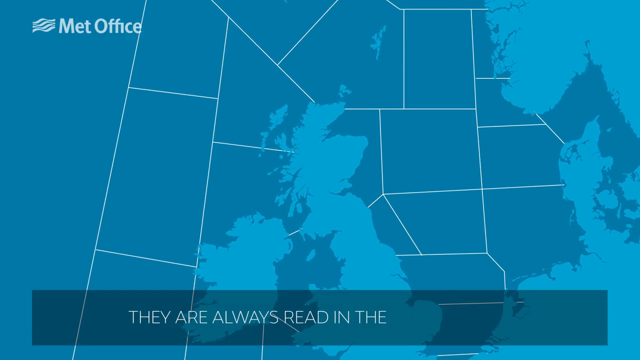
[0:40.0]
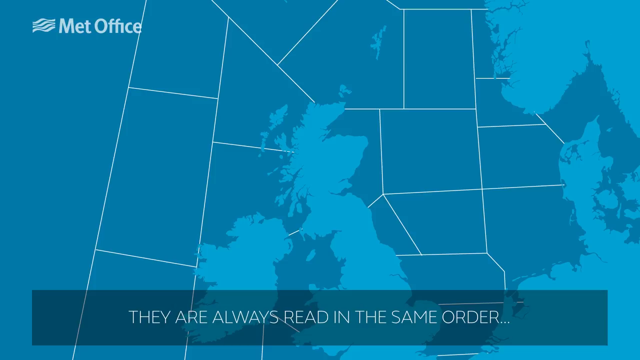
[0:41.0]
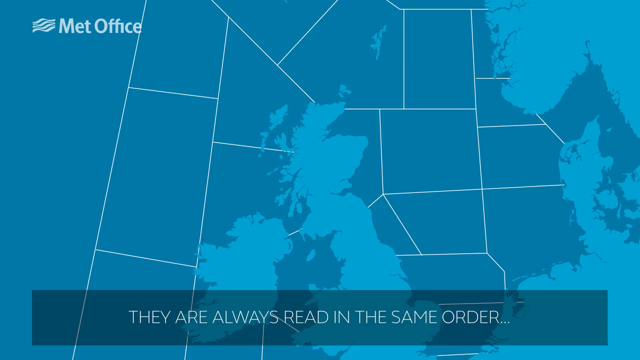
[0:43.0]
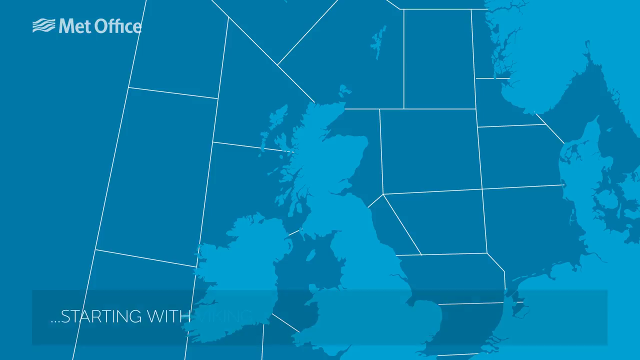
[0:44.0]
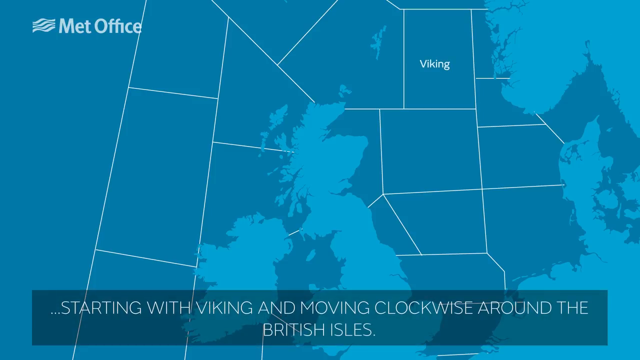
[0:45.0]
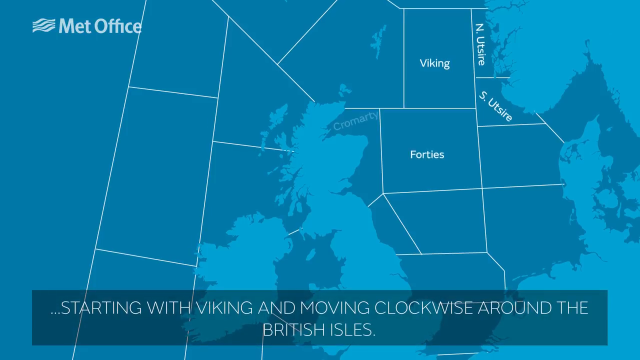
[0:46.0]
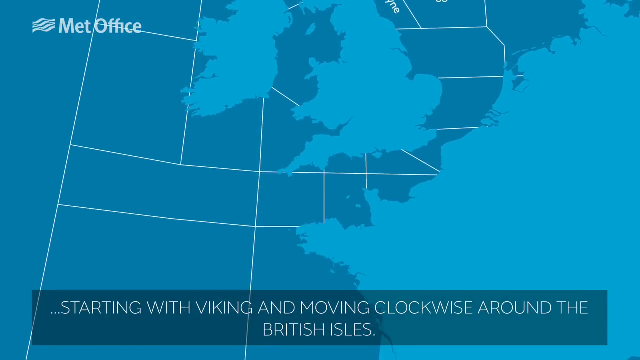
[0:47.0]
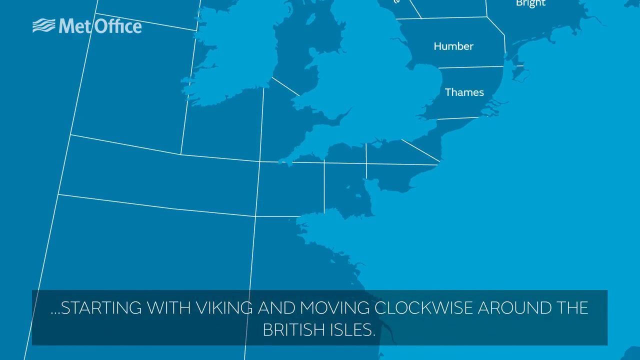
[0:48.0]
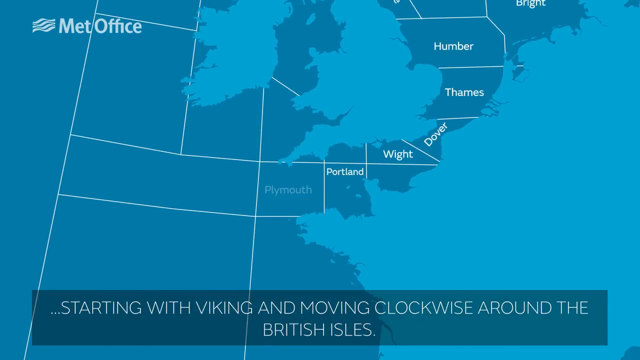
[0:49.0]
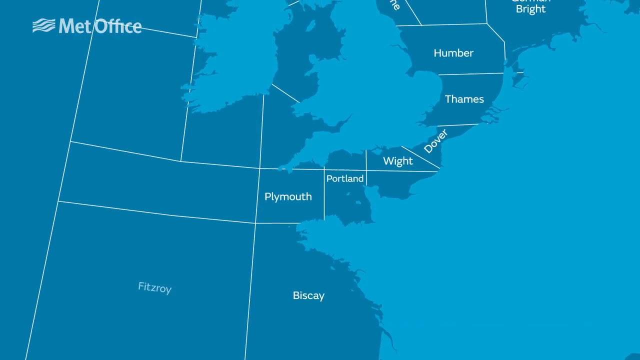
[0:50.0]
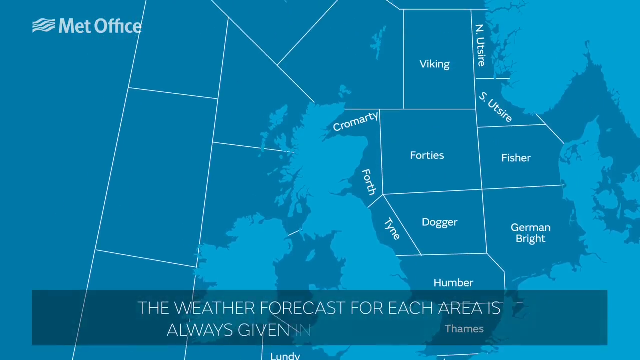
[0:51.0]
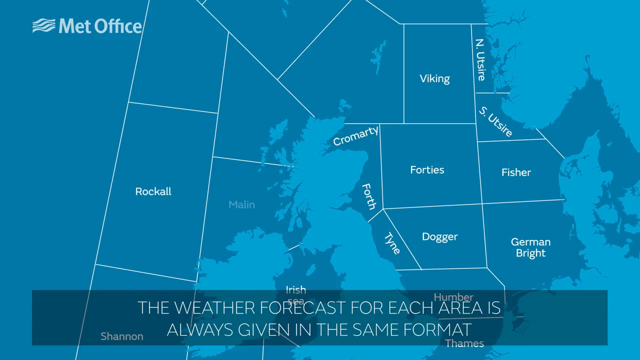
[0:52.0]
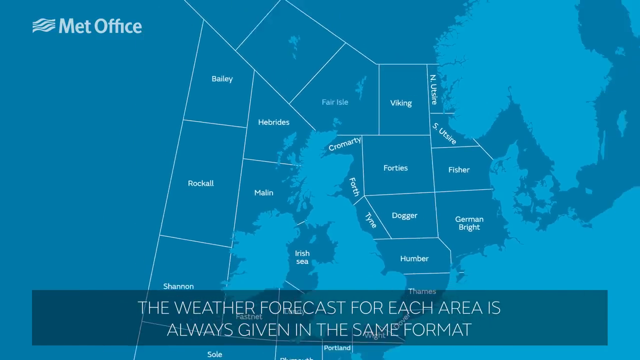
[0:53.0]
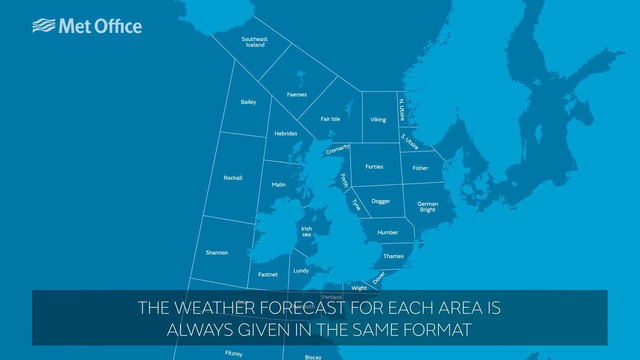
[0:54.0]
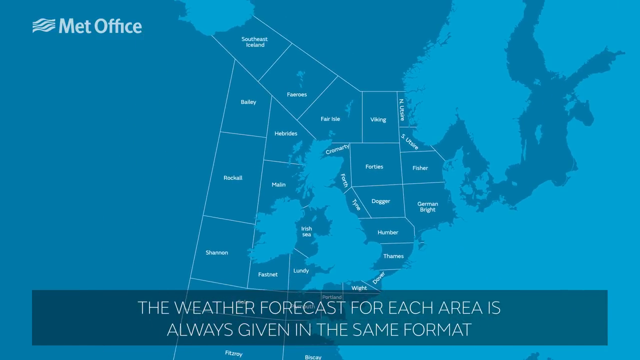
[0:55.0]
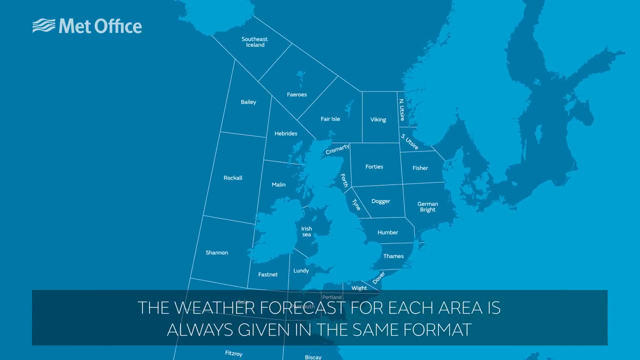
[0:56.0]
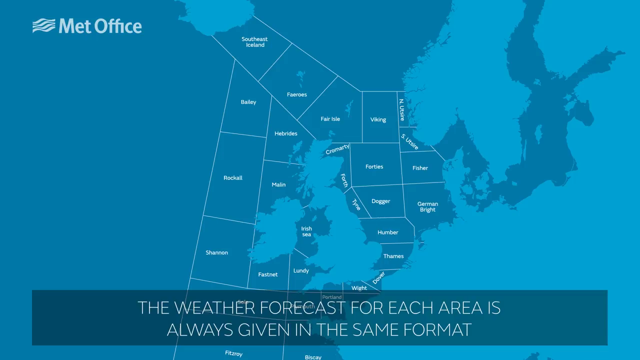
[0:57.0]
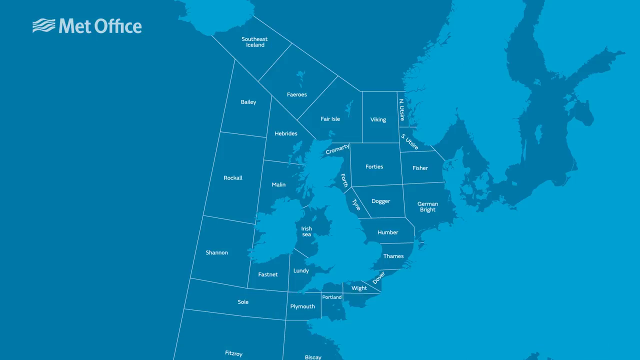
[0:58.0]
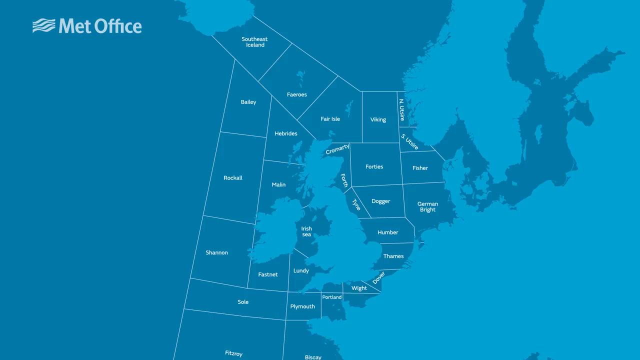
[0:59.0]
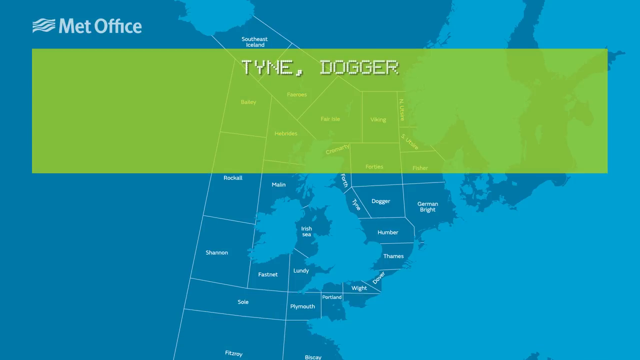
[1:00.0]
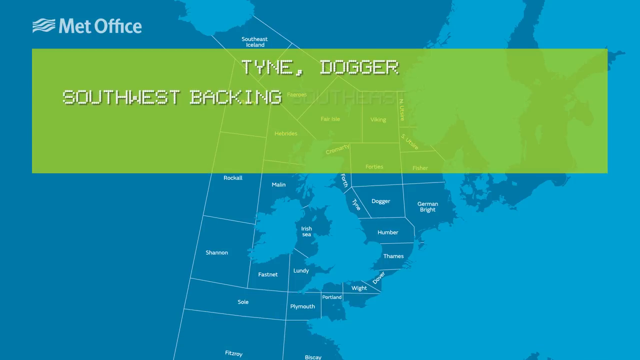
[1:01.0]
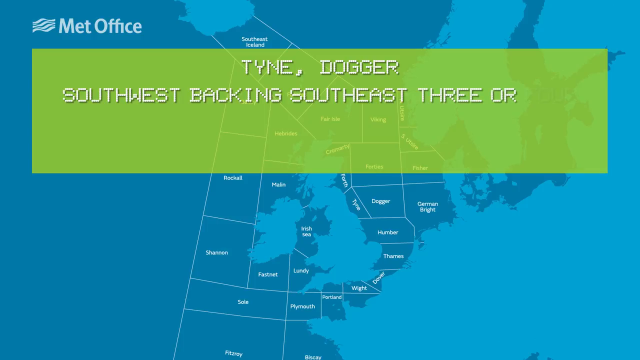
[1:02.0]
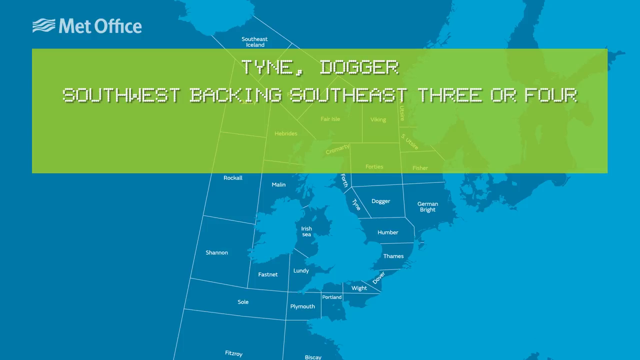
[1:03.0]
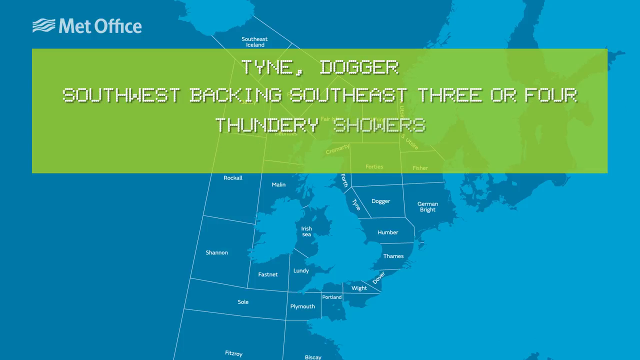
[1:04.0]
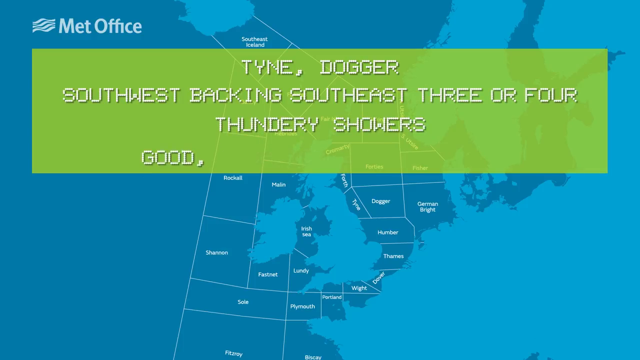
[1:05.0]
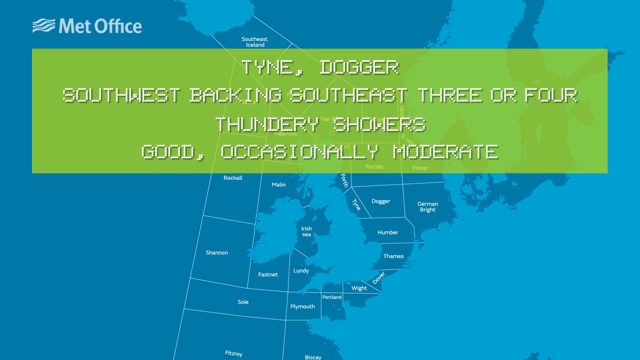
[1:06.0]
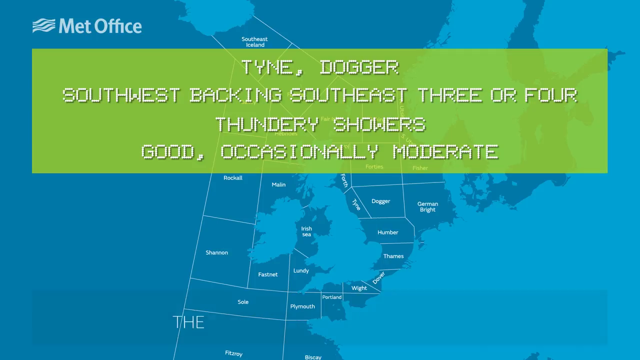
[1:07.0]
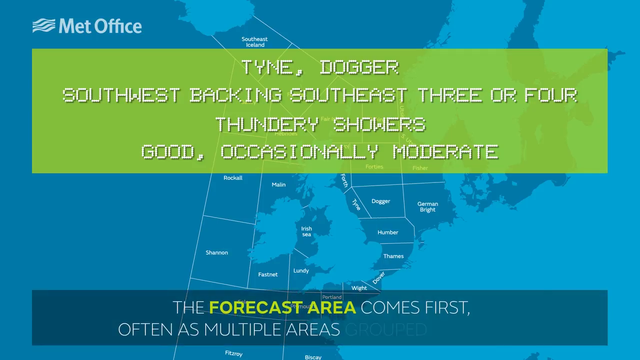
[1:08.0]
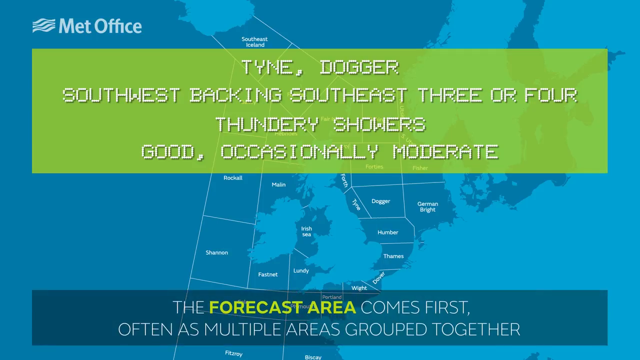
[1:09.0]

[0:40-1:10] A weather forecast from the Met Office is shown. Text describes a routine starting with Viking and moving clockwise, and says the weather forecast for each area is always given in the same format, while maps of the weather appear. Further text mentions Viking and "three or four" thundery showers, and says the forecast area comes first, with areas grouped. Some areas on the map are boxed in blue, and the background is blue. The video continues showing parts of the country along with scales representing temperatures.